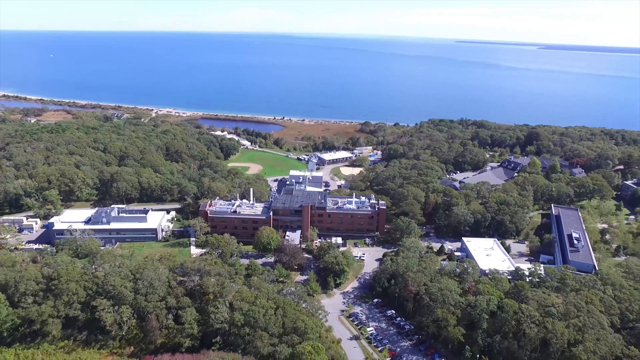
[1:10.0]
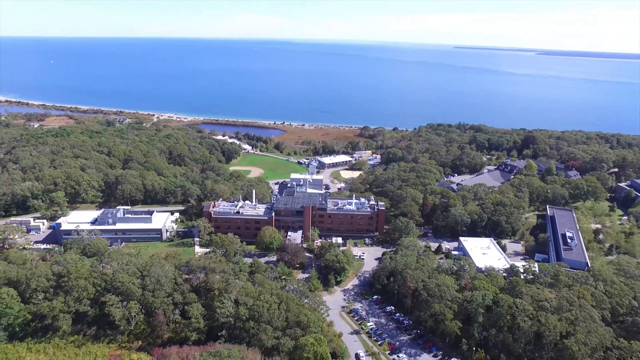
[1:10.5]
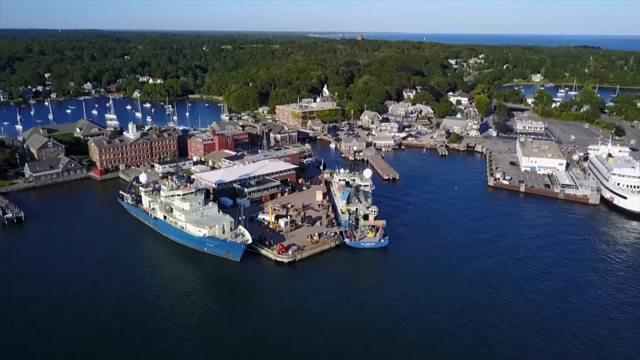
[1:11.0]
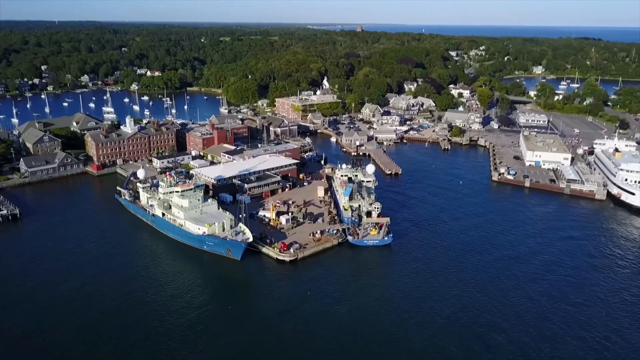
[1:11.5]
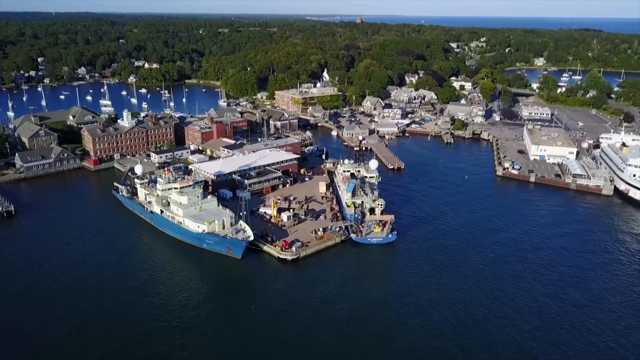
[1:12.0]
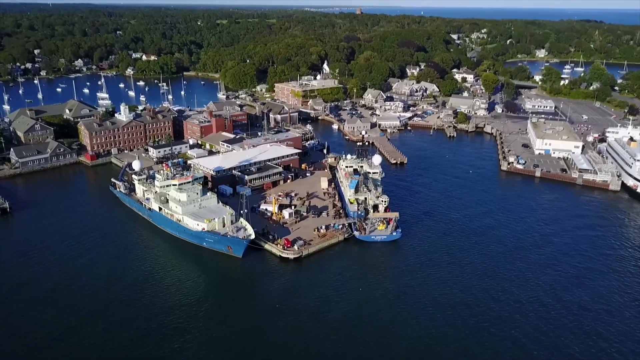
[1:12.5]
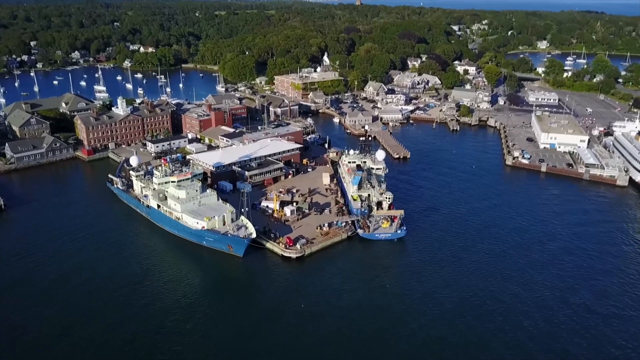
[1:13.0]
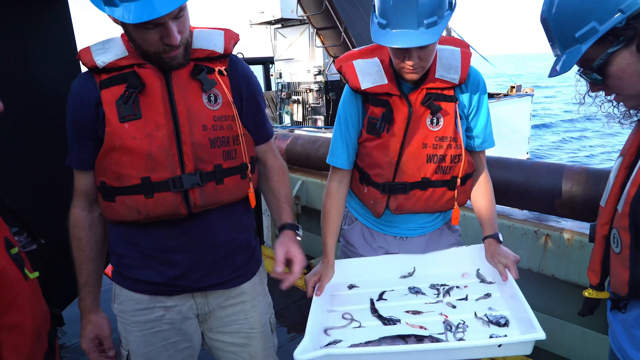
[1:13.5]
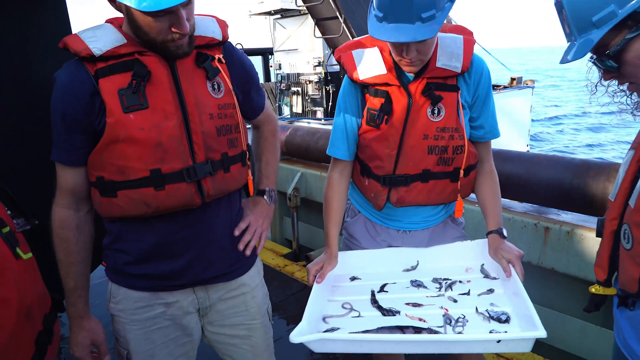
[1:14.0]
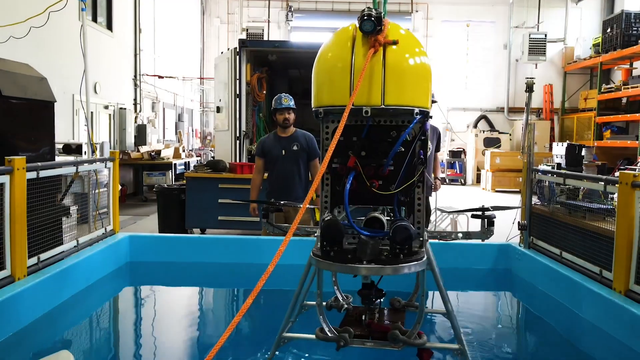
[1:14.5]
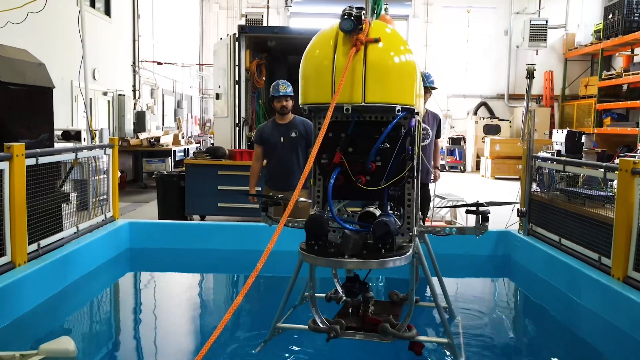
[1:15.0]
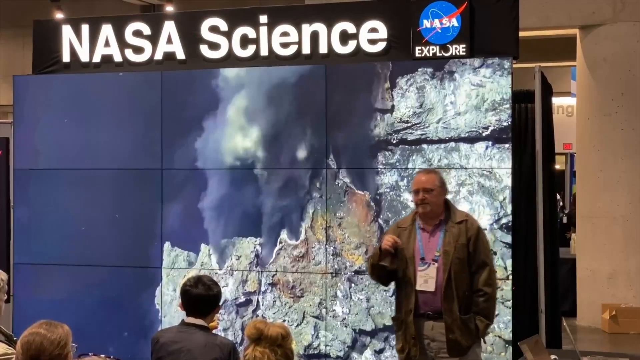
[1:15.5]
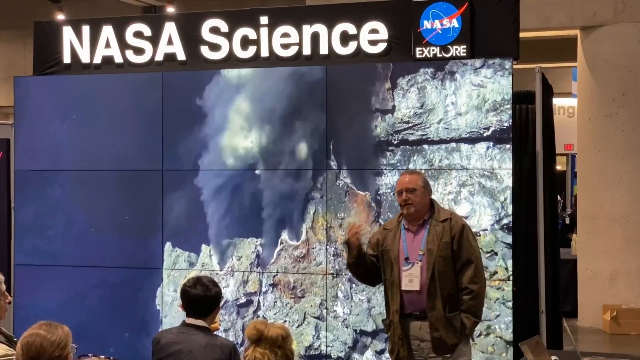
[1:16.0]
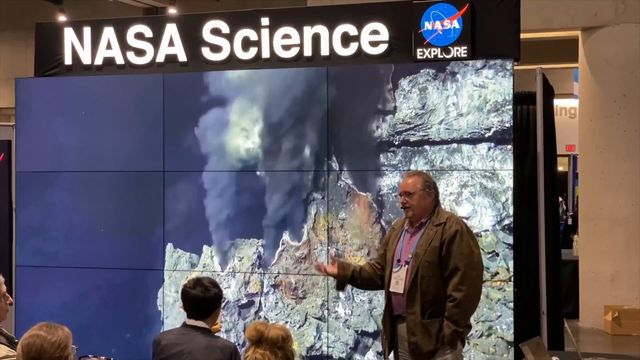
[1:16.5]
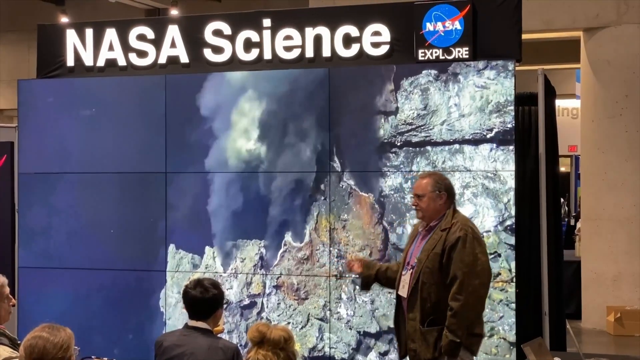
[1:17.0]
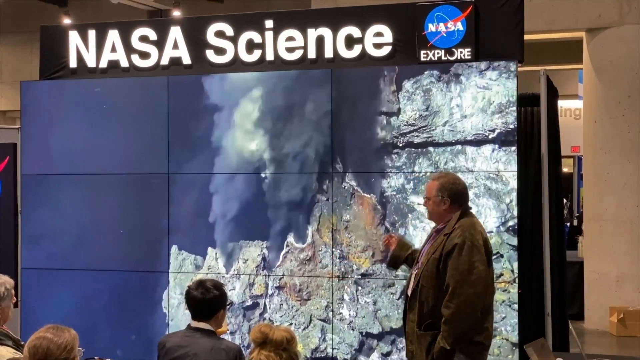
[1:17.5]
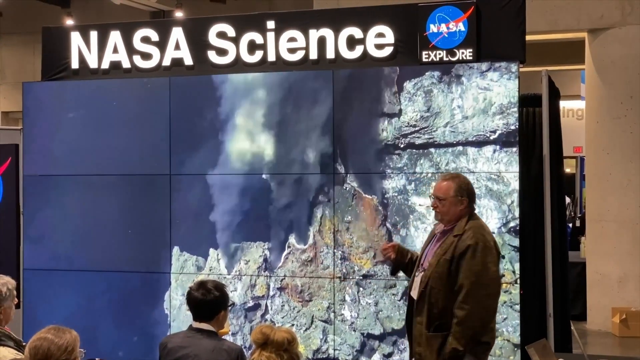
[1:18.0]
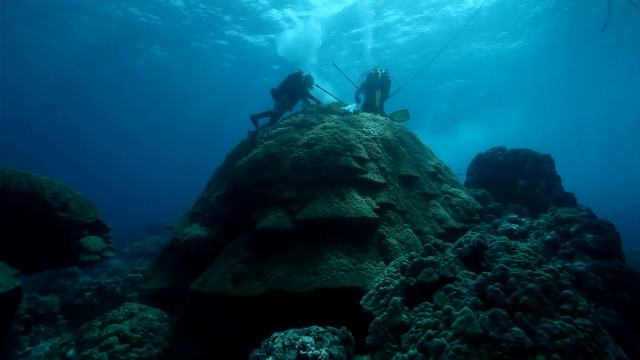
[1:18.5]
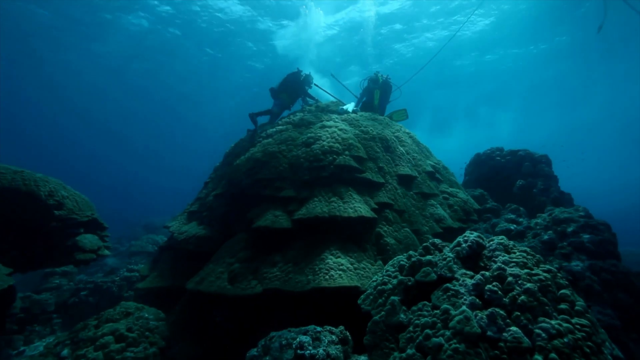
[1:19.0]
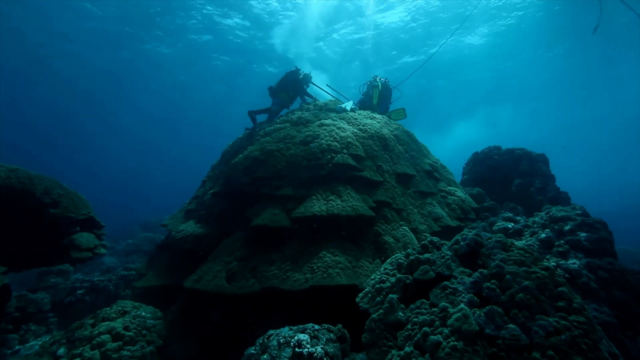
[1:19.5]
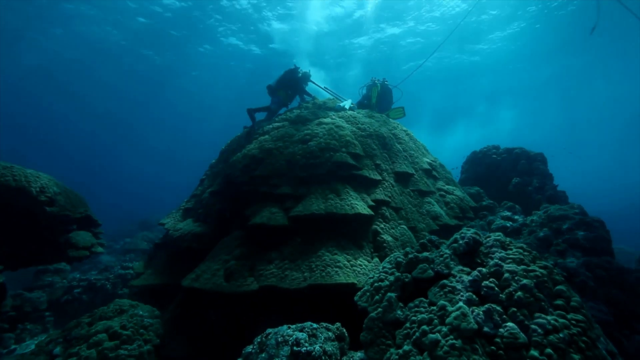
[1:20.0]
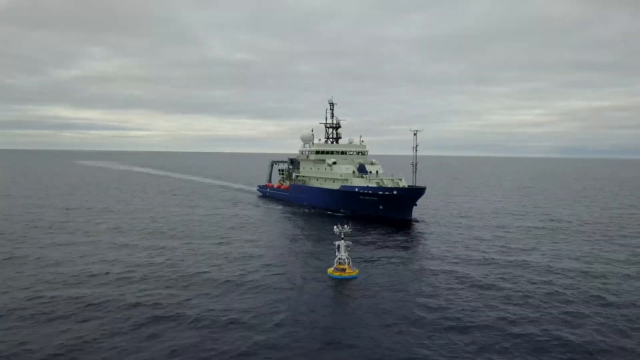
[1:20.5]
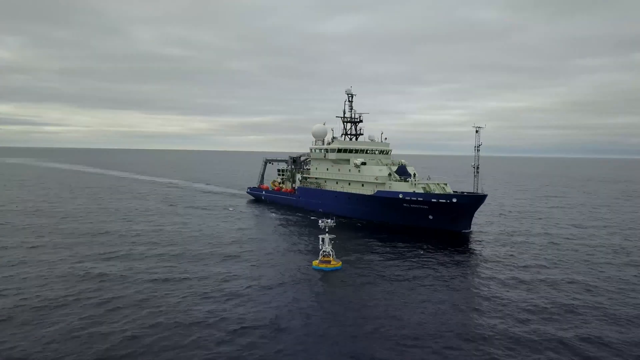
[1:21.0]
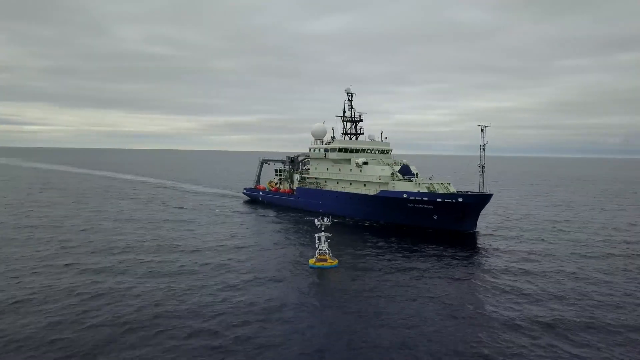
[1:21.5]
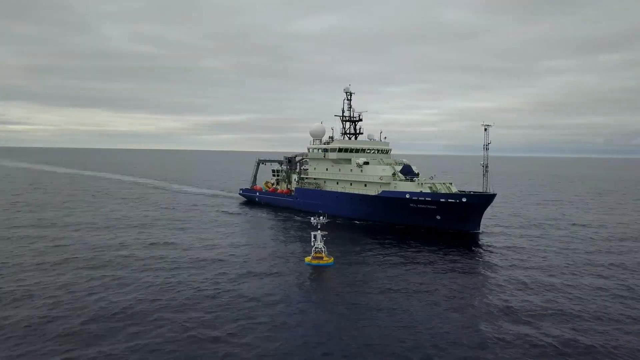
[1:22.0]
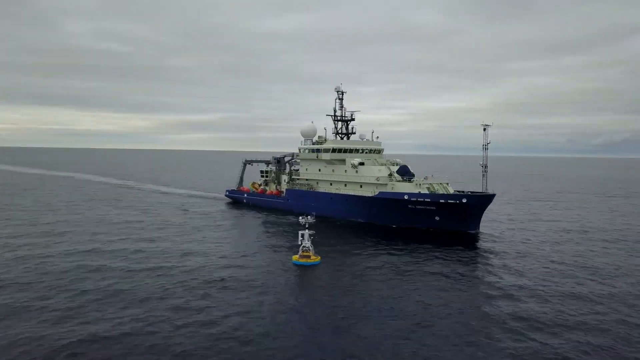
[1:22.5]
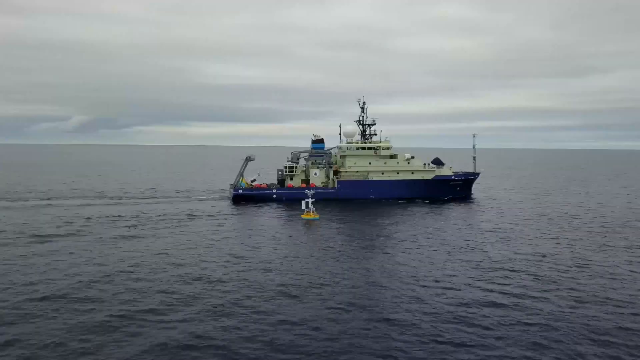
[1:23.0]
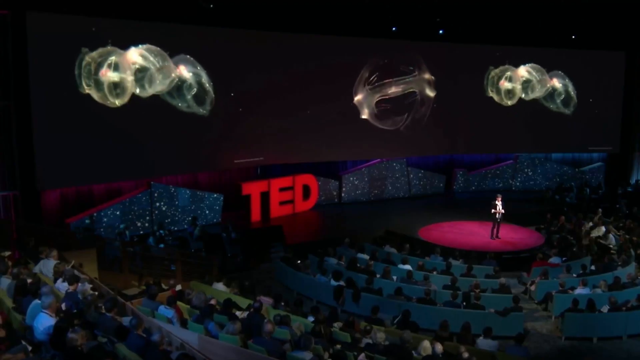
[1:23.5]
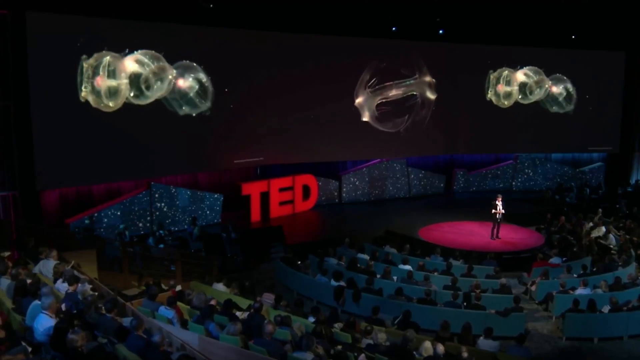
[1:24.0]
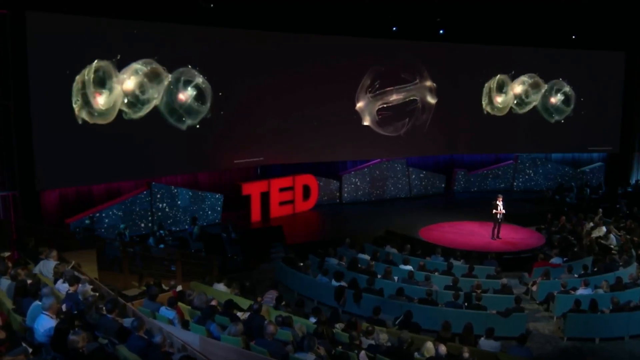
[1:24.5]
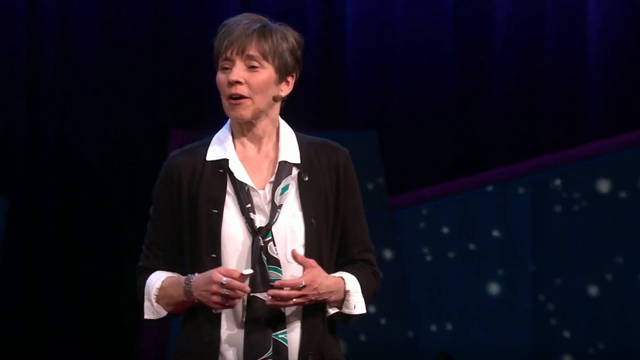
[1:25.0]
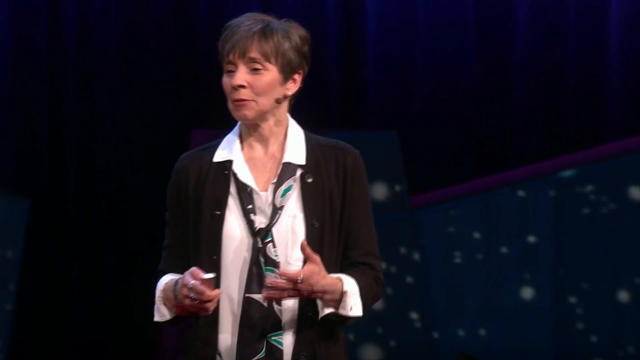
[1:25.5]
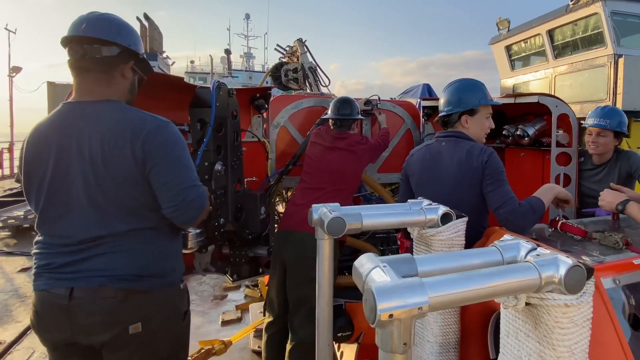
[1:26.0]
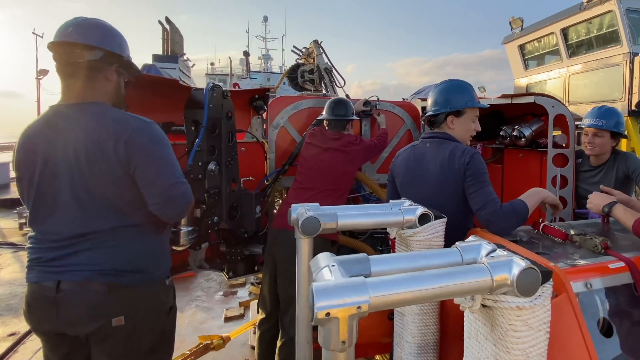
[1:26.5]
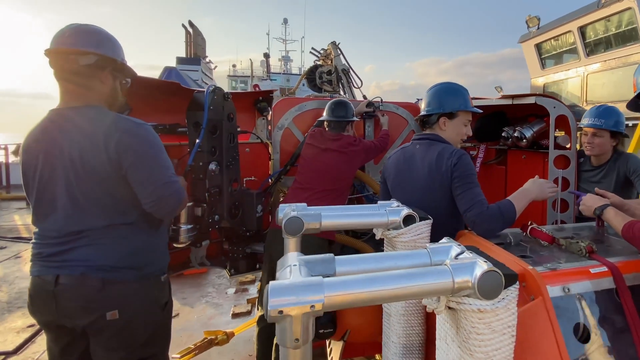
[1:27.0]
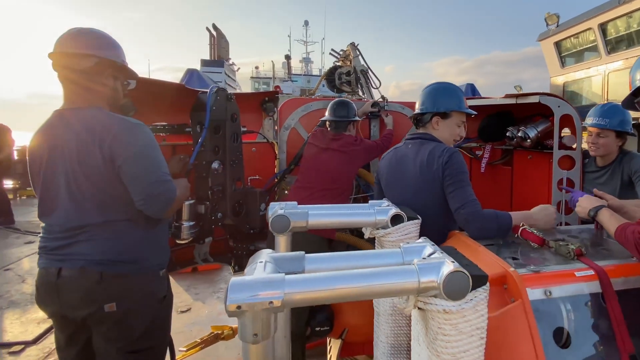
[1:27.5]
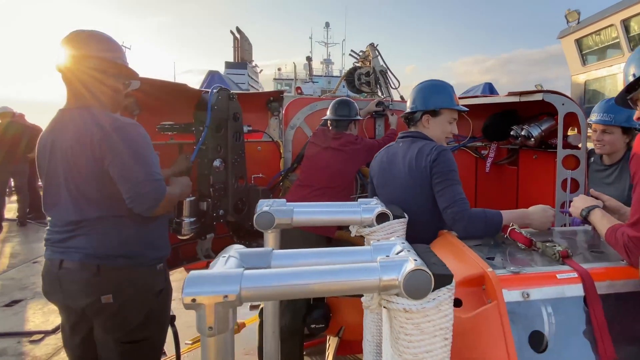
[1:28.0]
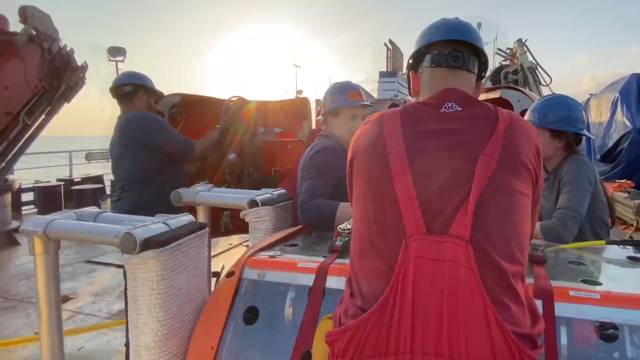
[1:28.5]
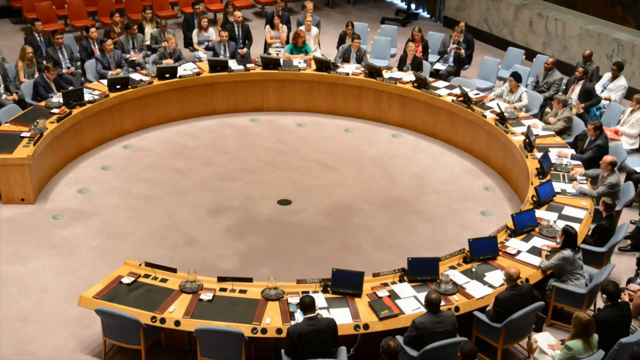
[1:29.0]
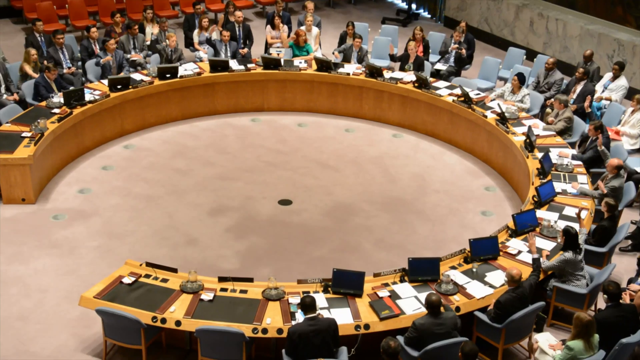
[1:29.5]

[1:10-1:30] The camera moves slowly, showing where boats are located on the blue sea; the area with the boats also has small buildings. People wearing protective jackets appear to be discussing something. "NASA science" appears on the screen, and a person in front of a landscape shows it to an audience. Divers underwater swim around a big green rock, seemingly investigating something. The video then shows a blue ship and a machine on top of the water. A person is on a stage with the heading "TED" on the screen, which shows different things, while people sit watching.